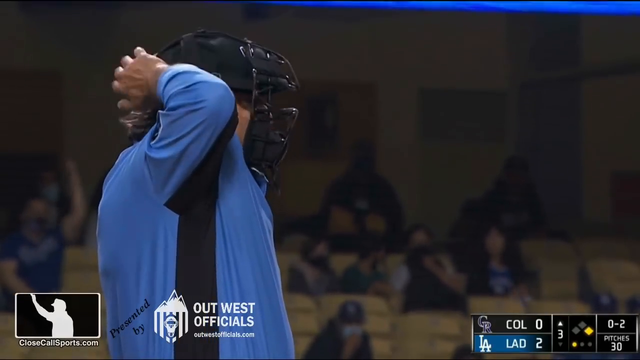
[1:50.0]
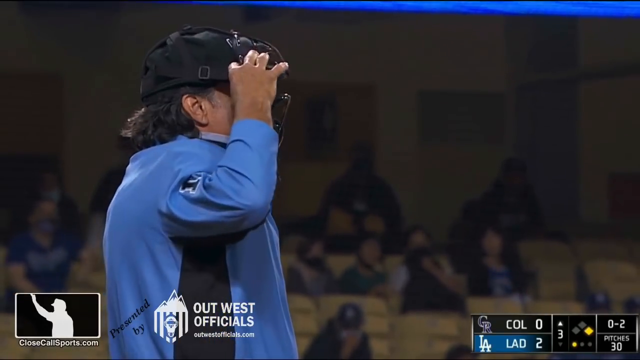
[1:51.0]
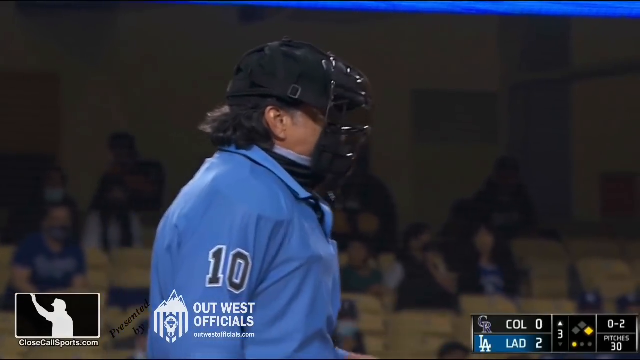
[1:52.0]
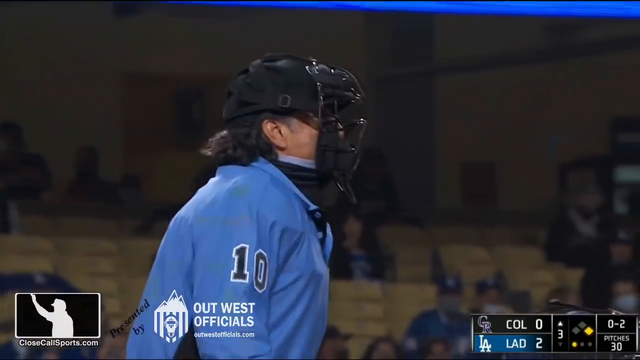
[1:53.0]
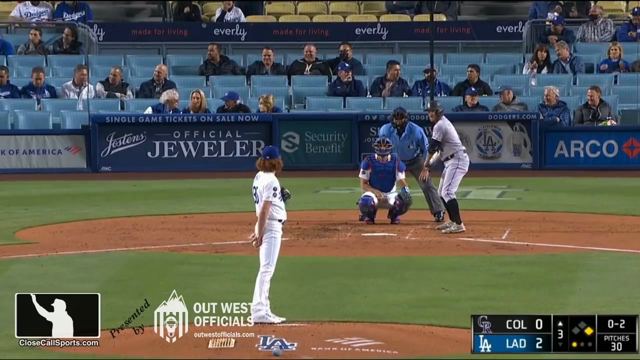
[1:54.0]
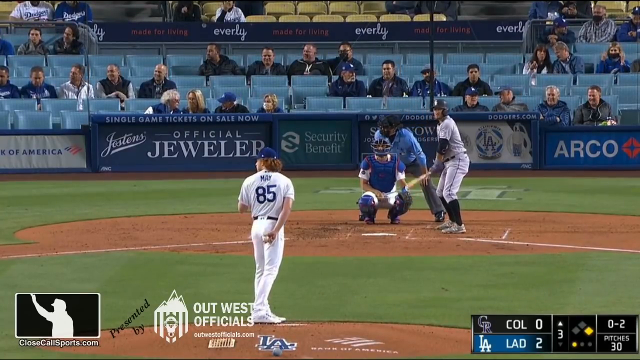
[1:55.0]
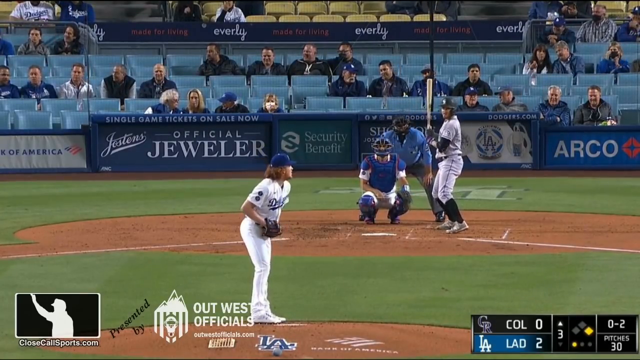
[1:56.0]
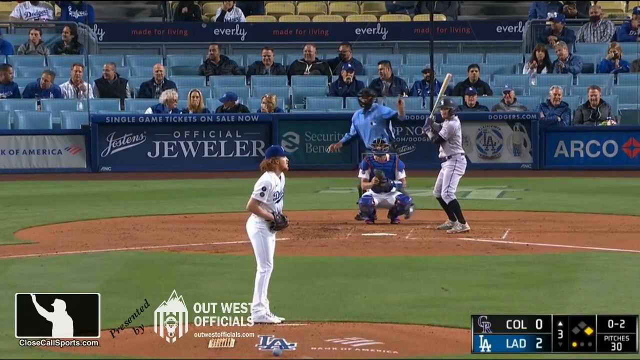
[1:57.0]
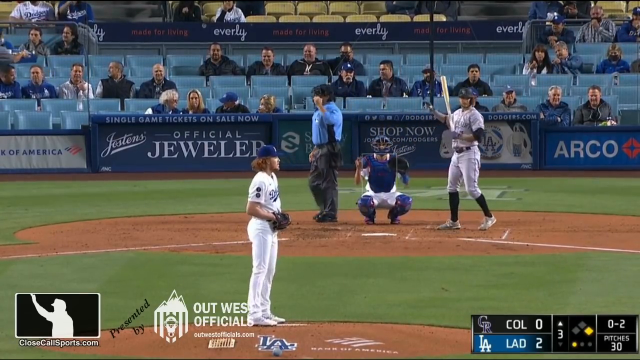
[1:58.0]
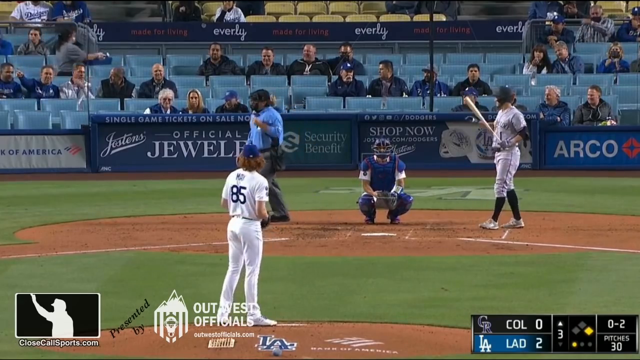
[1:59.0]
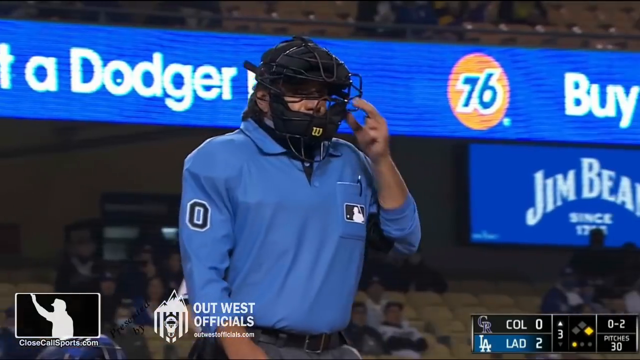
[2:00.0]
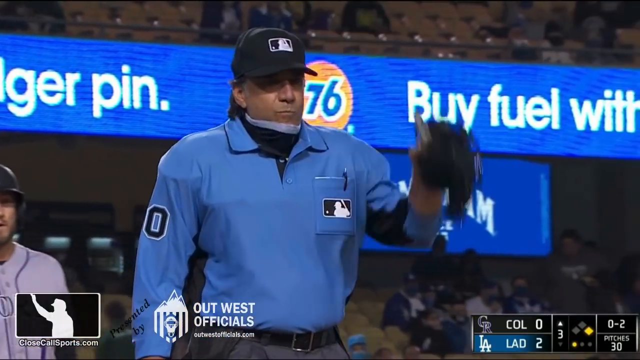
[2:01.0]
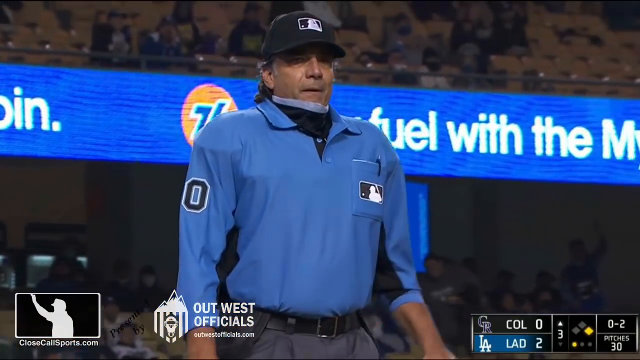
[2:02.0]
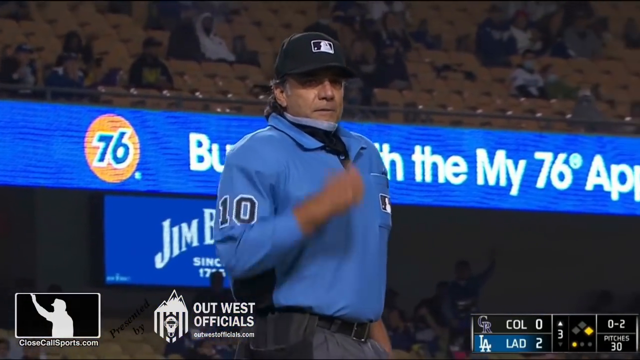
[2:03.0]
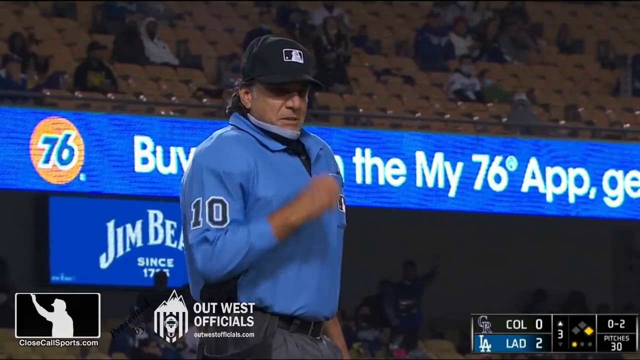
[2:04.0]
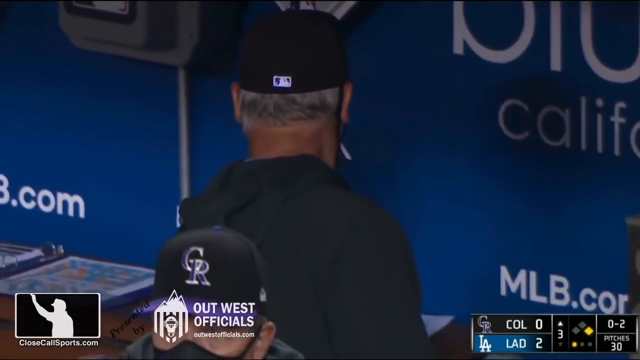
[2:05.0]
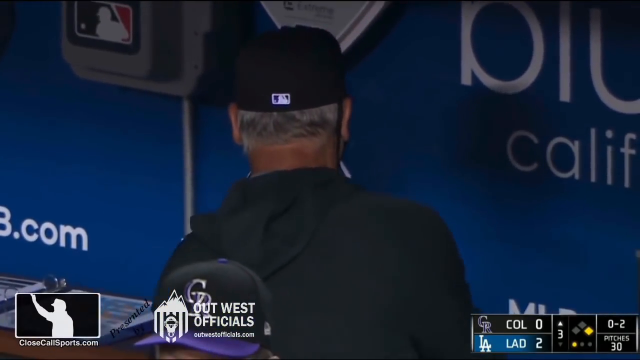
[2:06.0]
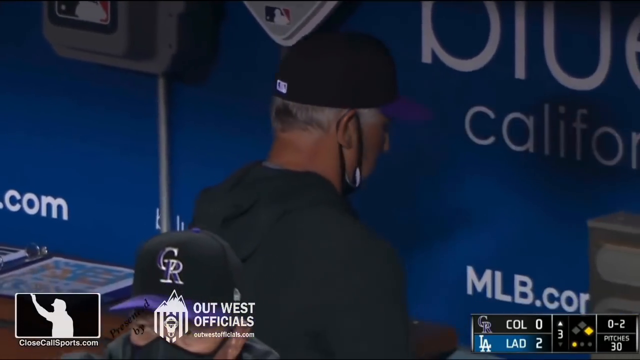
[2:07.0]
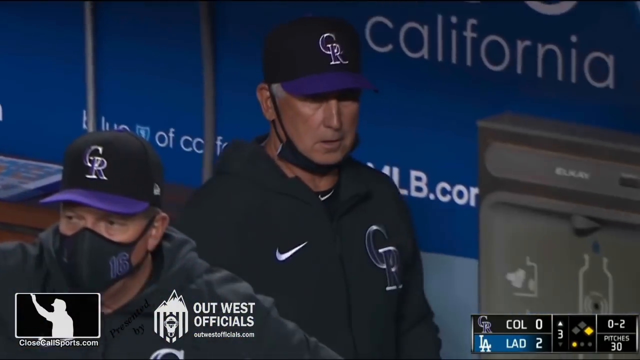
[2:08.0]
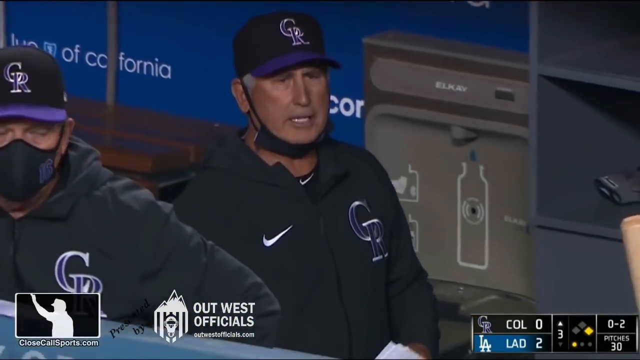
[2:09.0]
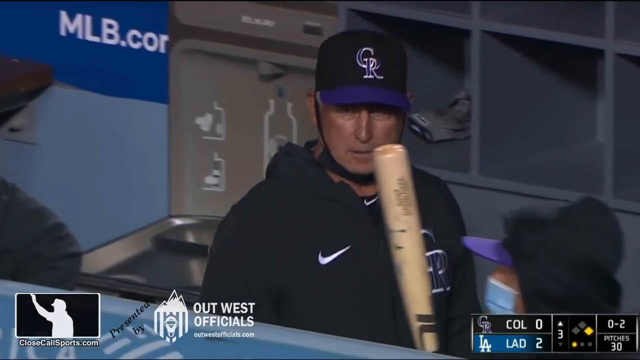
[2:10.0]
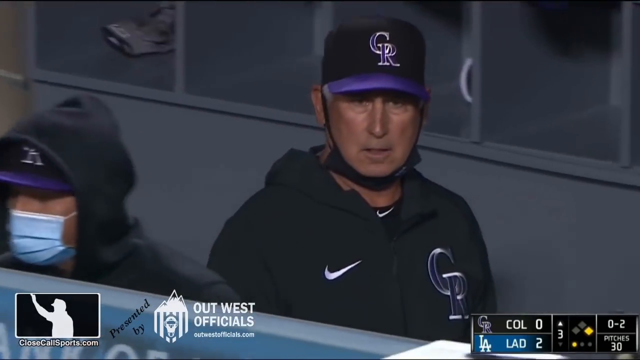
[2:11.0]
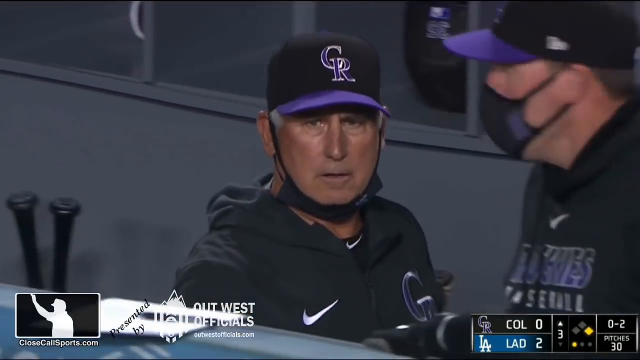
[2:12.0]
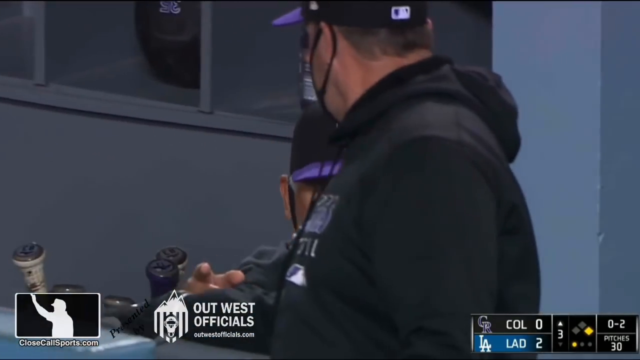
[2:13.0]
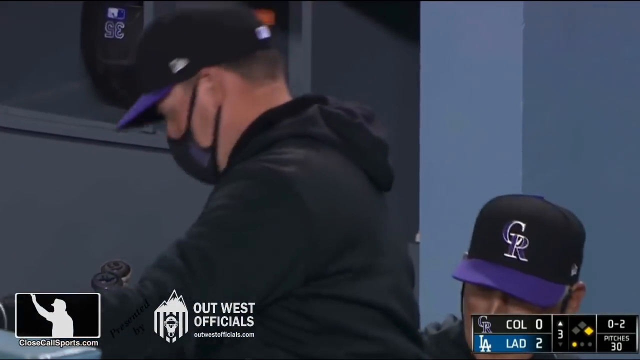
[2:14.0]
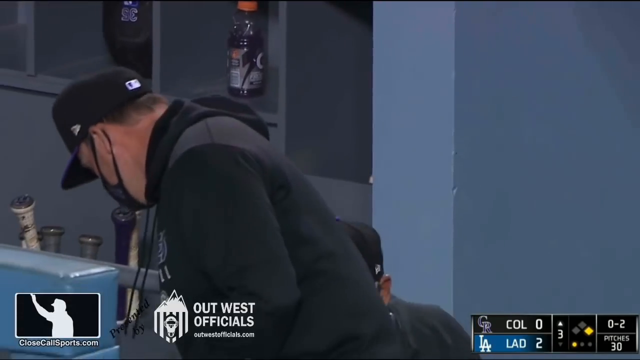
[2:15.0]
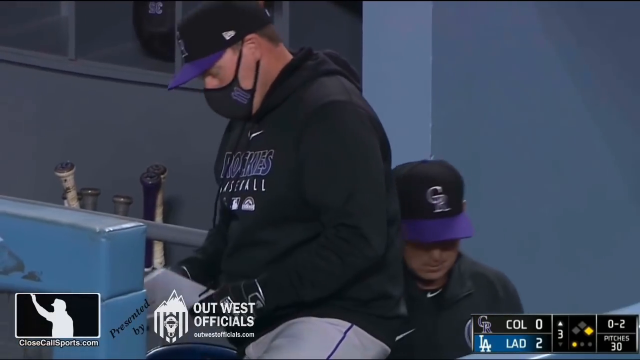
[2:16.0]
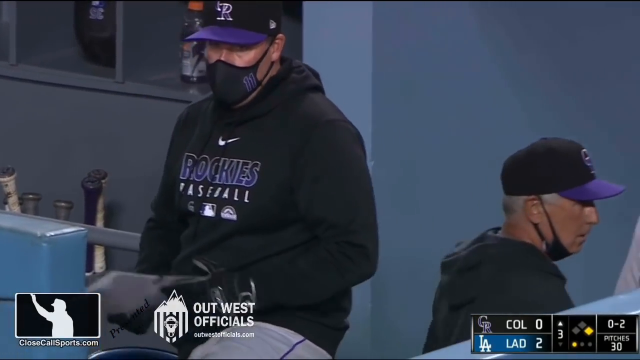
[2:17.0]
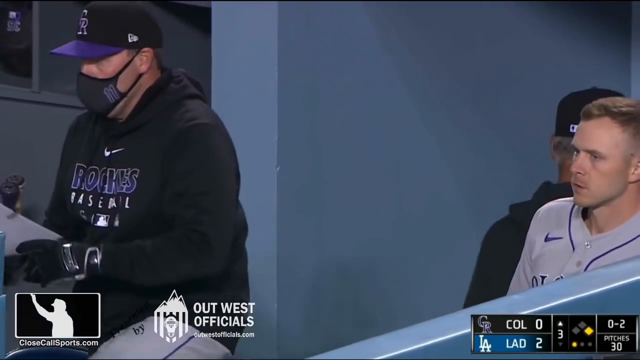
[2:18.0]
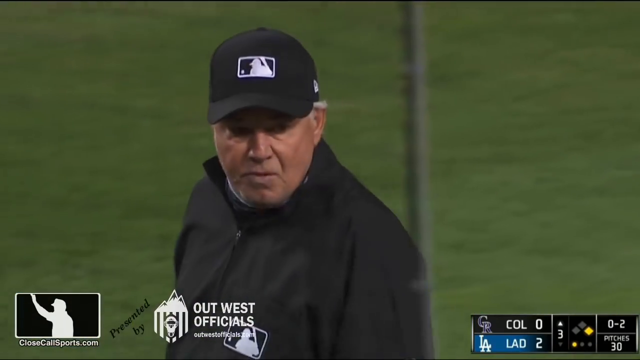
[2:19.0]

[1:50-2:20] The umpire puts his mask back on and crouches down as the game continues. The screen pans, and May is still pitching for the Los Angeles Dodgers; the catcher crouches down with the umpire to start play again as the Rockies player gets back in the batter's box. The game then stops again because the Rockies manager is still barking at the umpire. The umpire removes his mask. The manager has not yet left the dugout; he grabs his sheet and is still walking in the back of the dugout, and the umpire is not pleased that he has not left.